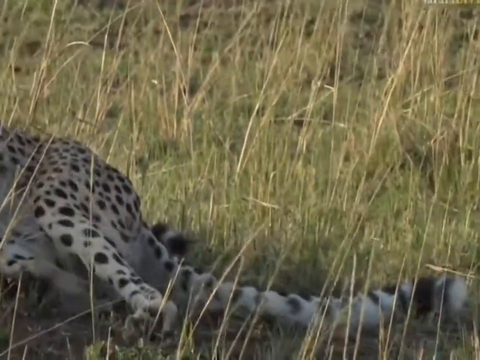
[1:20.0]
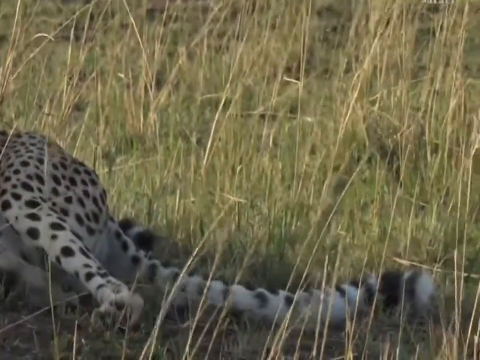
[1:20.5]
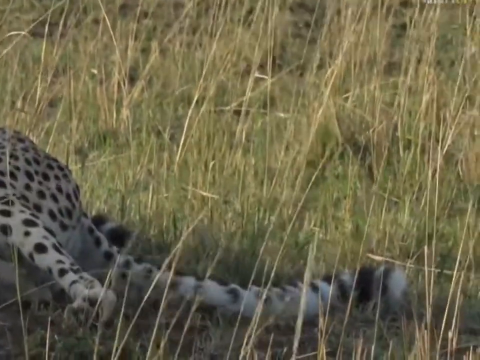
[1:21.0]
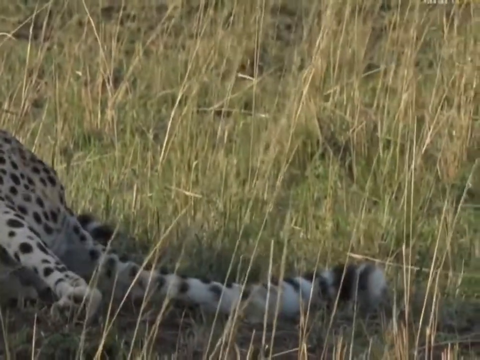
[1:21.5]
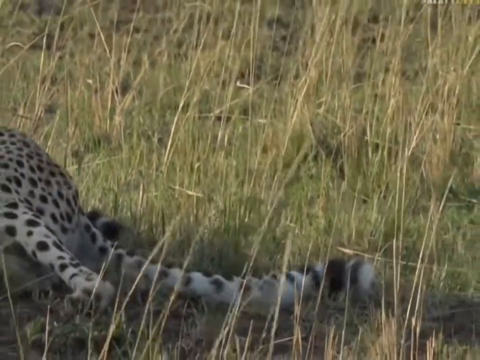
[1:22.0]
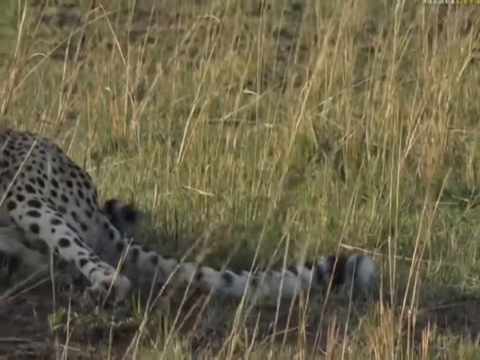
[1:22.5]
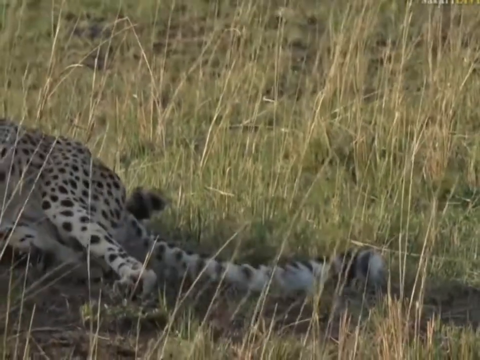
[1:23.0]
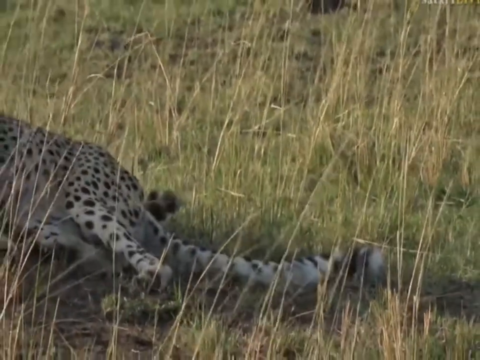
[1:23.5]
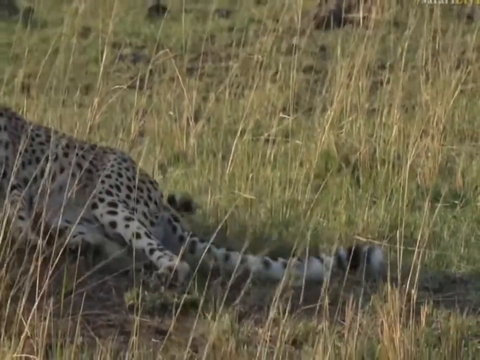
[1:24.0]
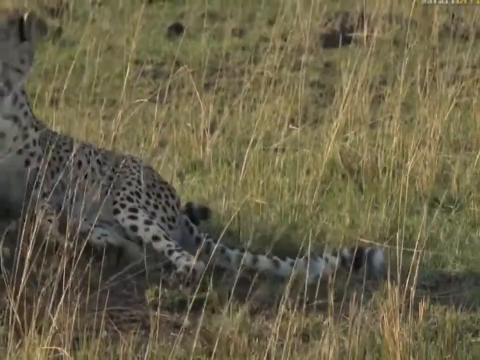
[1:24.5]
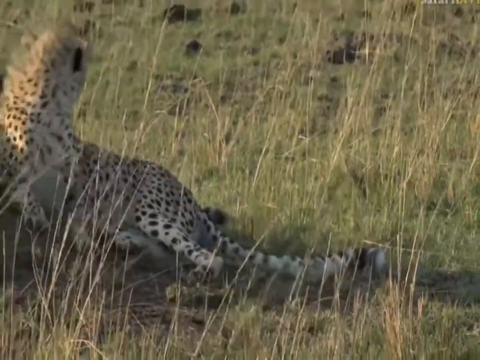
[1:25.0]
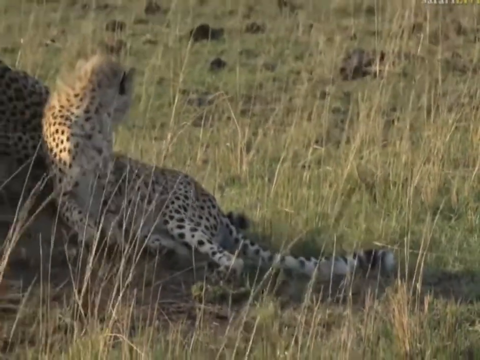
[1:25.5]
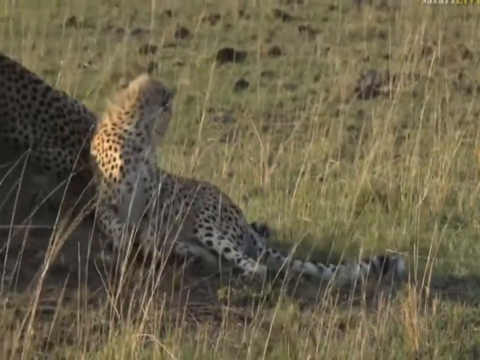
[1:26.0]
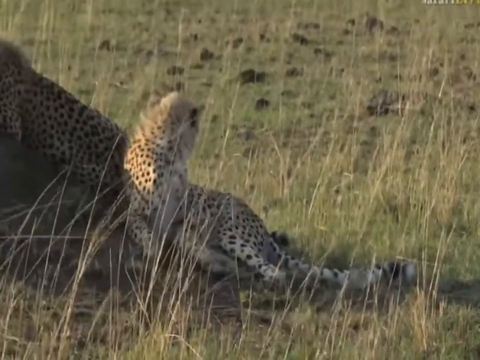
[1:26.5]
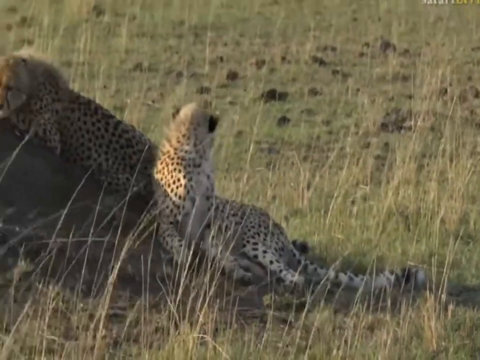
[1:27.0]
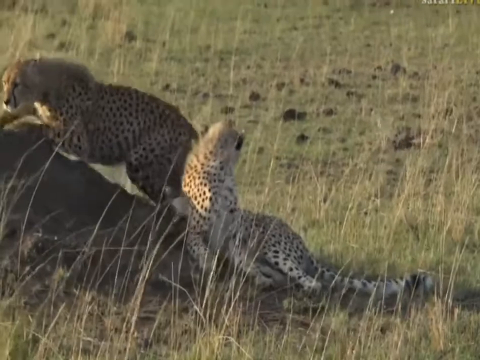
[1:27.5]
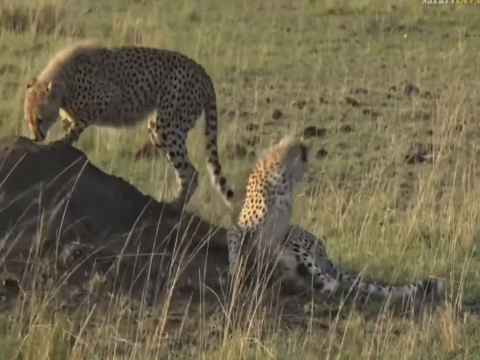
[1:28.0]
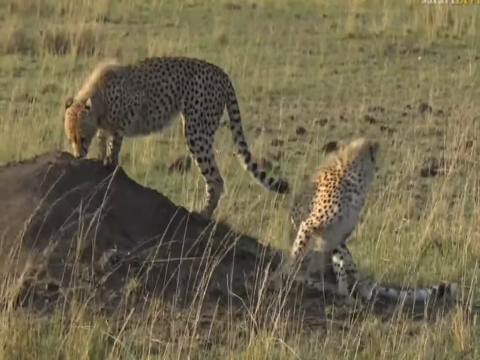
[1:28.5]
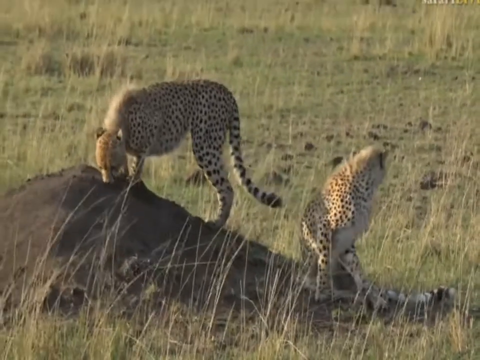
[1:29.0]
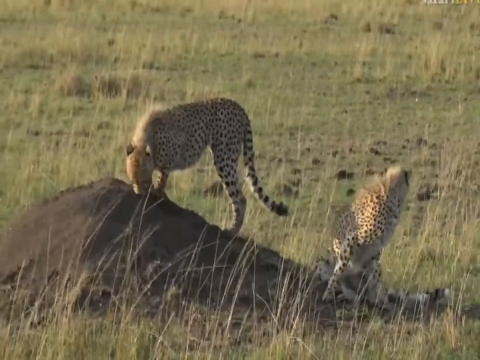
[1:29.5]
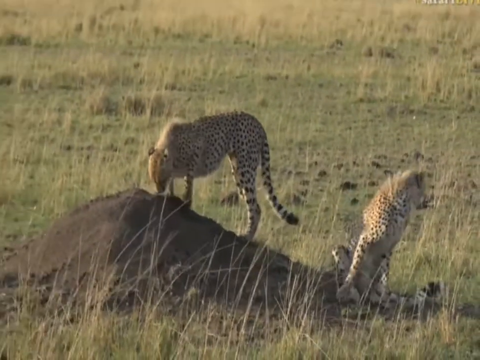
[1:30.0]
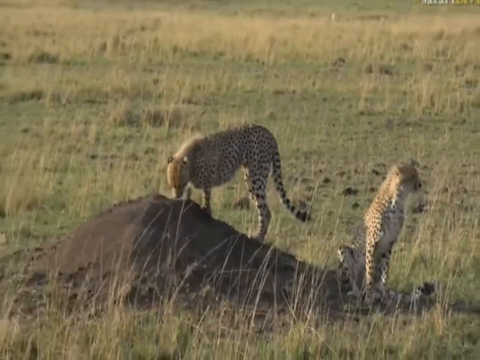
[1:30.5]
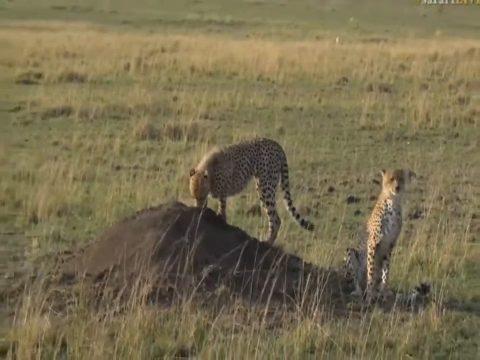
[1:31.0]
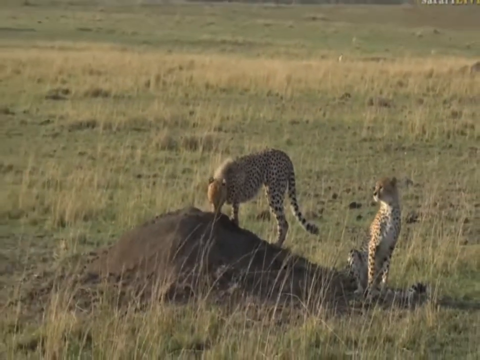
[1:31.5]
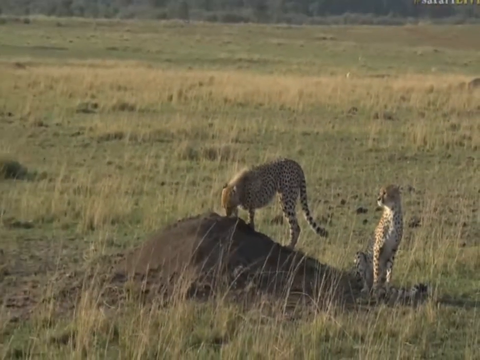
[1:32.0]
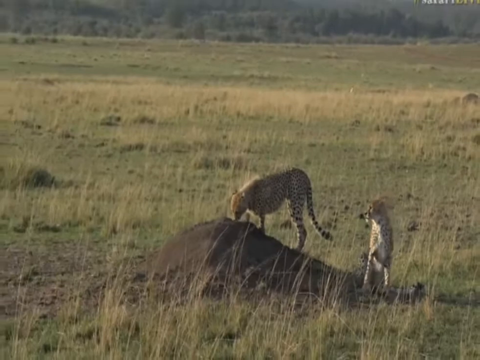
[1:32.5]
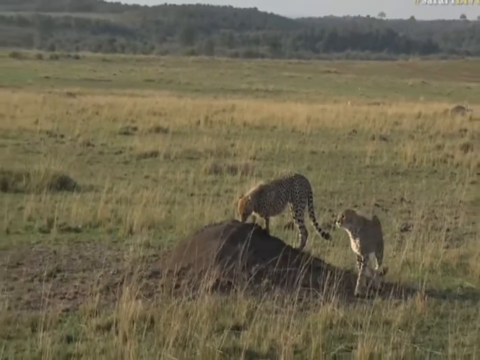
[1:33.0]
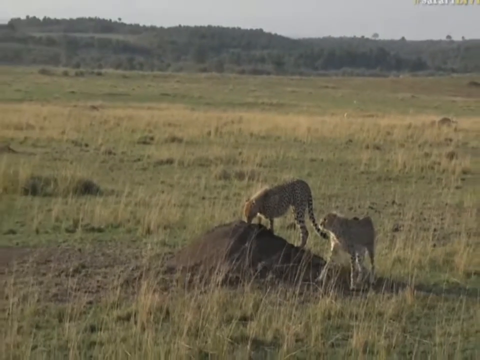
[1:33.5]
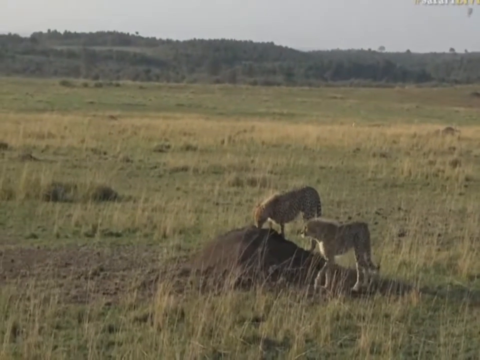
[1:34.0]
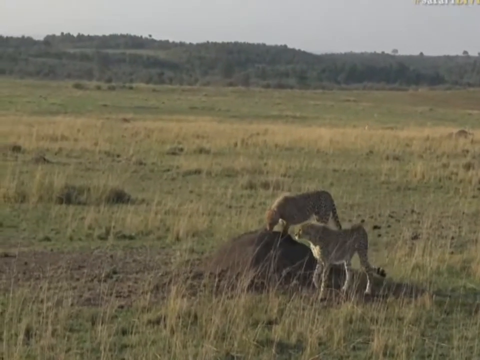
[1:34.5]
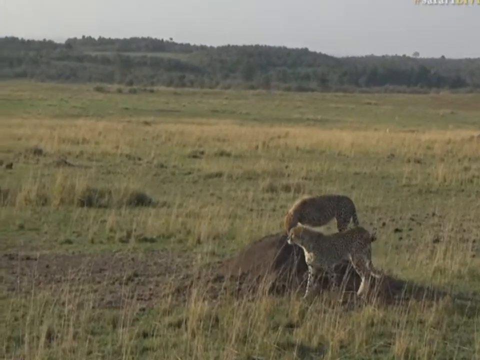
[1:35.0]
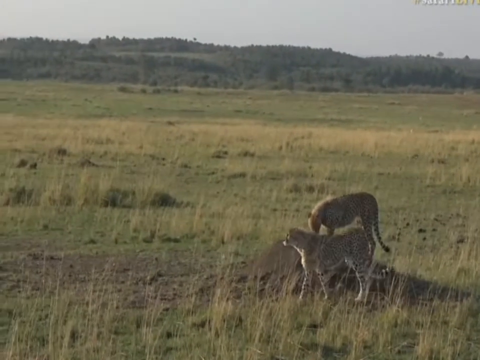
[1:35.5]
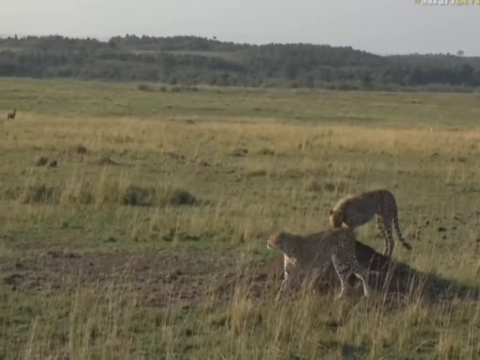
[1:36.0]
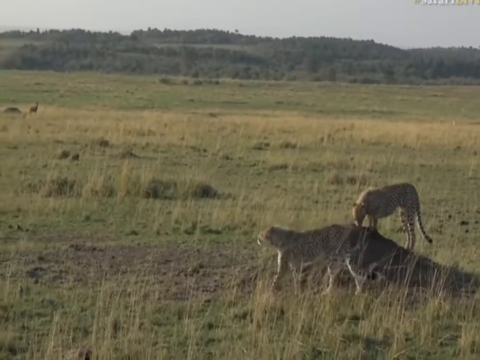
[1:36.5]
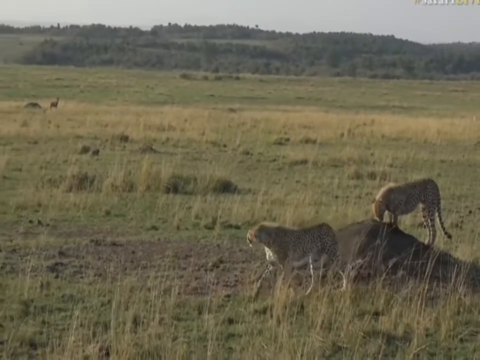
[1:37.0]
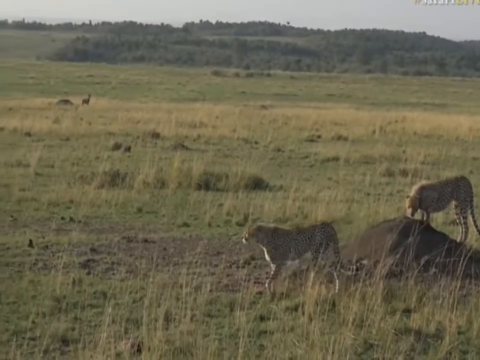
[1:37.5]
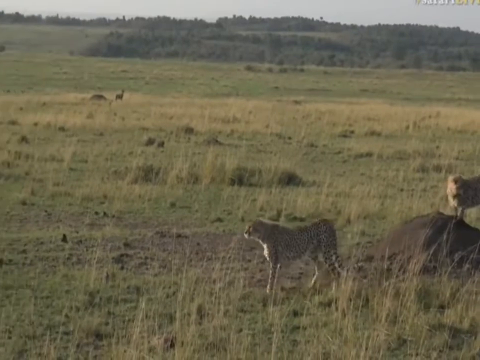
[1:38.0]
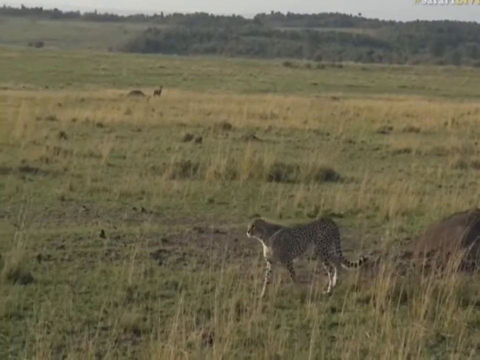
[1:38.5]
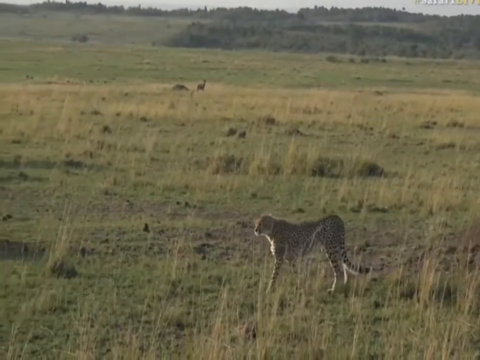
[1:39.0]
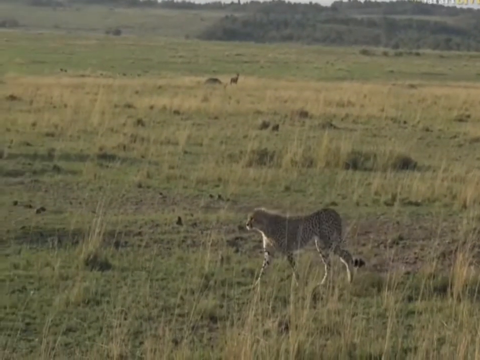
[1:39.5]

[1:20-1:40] The camera pans to the right, following the body of the leopard at the bottom of the hill and showing its tail, then zooms out to a wider view. The leopard at the bottom is still visible, and the leopard behind it, which was lying down, quickly gets up on all fours and sniffs the hill. It looks like the leopard that was originally sitting on top has left, and the others seem to be smelling the area, maybe to see where it went. That leopard keeps sniffing the top of the hill, while the other one gets up and walks slowly toward the left side, leaving the sniffing leopard behind at the bottom of the hill.